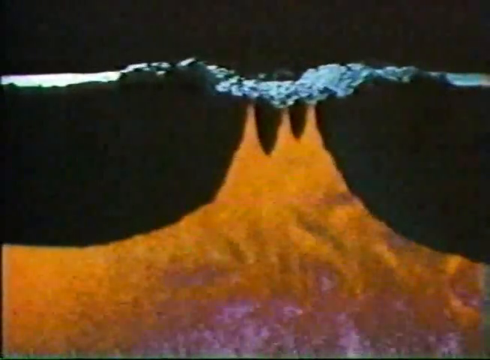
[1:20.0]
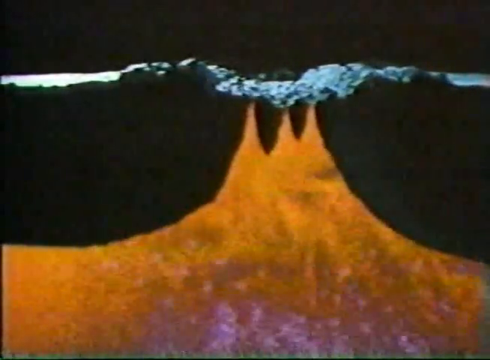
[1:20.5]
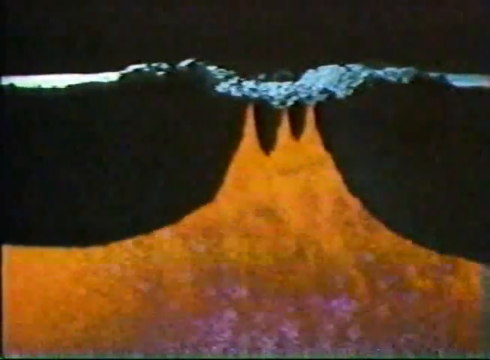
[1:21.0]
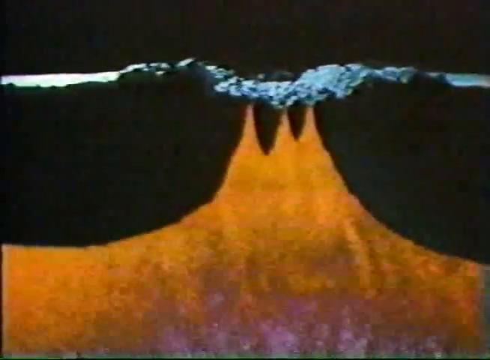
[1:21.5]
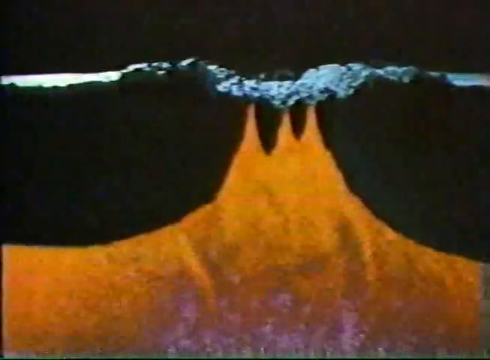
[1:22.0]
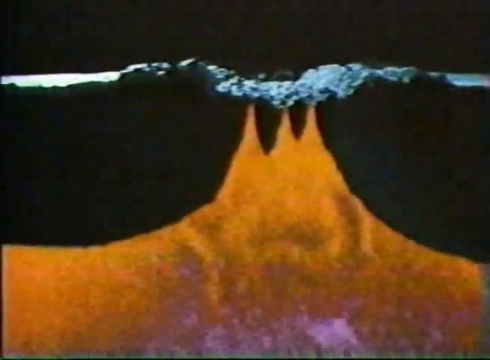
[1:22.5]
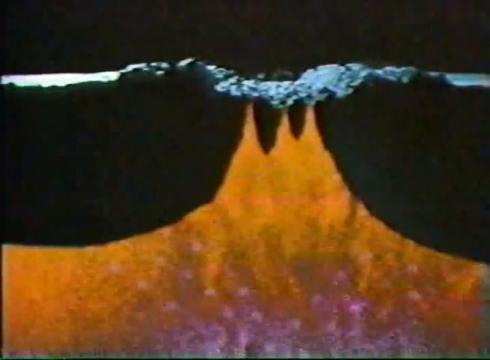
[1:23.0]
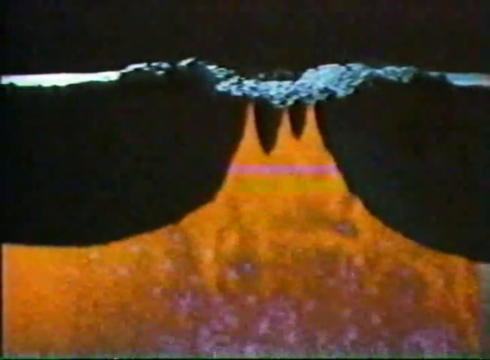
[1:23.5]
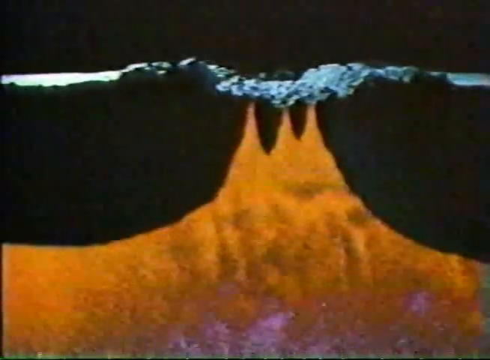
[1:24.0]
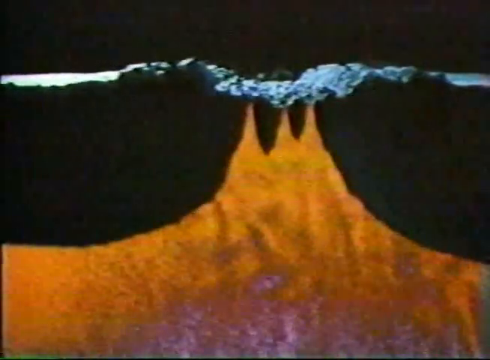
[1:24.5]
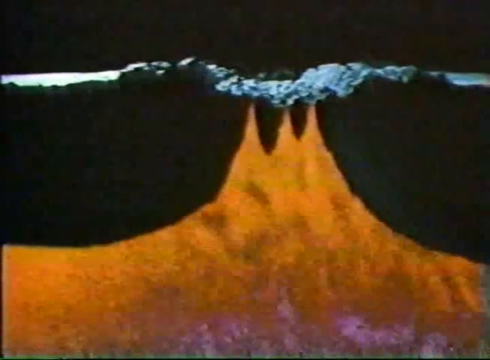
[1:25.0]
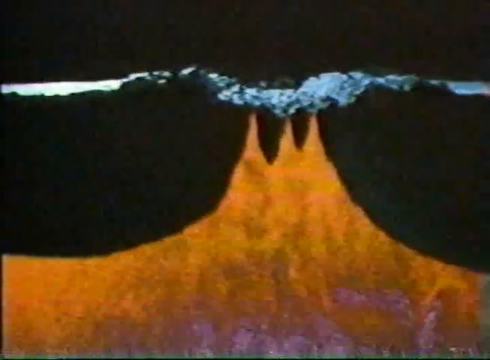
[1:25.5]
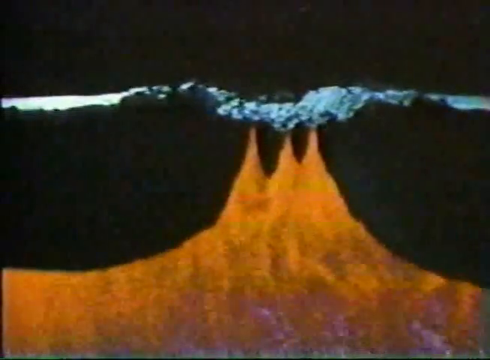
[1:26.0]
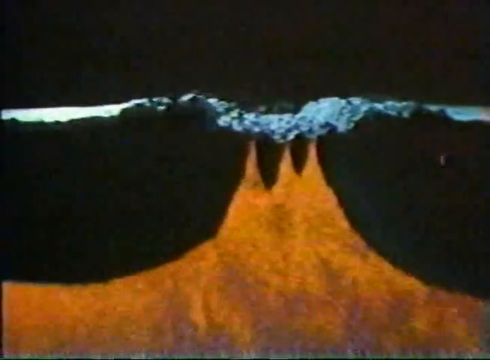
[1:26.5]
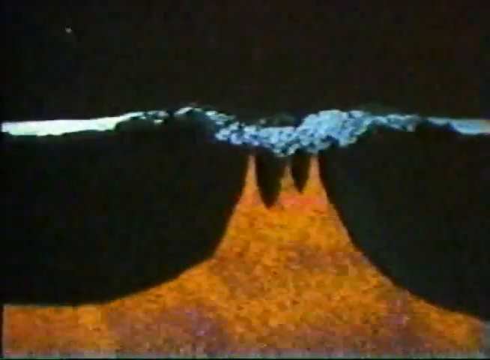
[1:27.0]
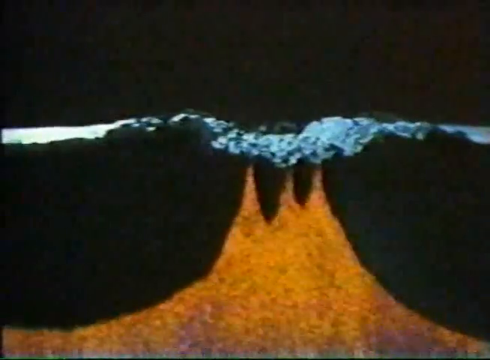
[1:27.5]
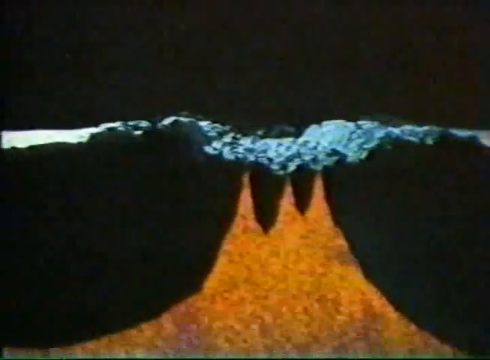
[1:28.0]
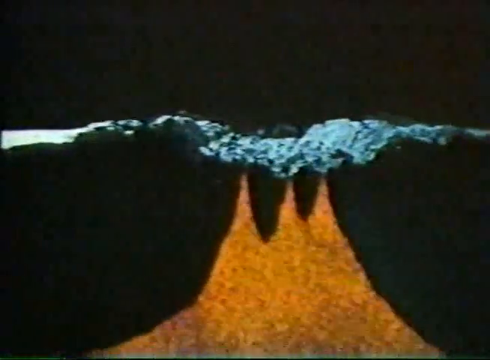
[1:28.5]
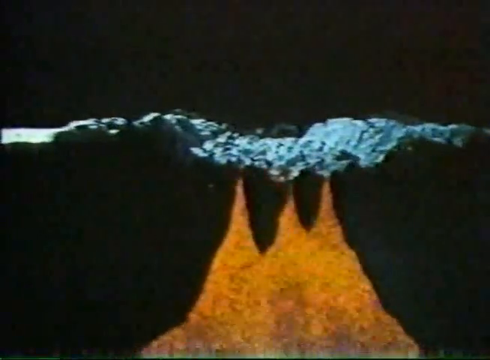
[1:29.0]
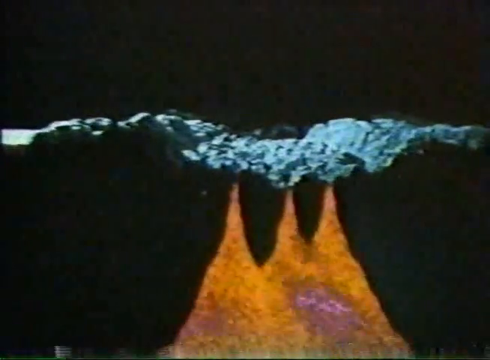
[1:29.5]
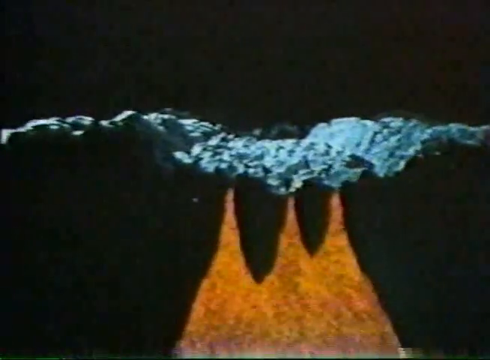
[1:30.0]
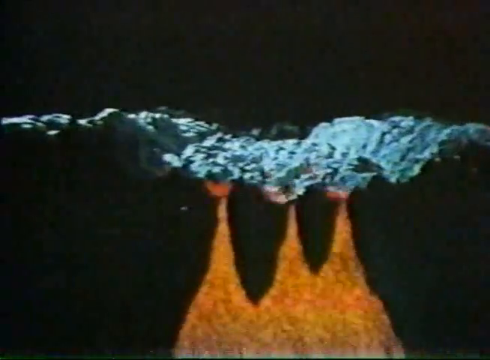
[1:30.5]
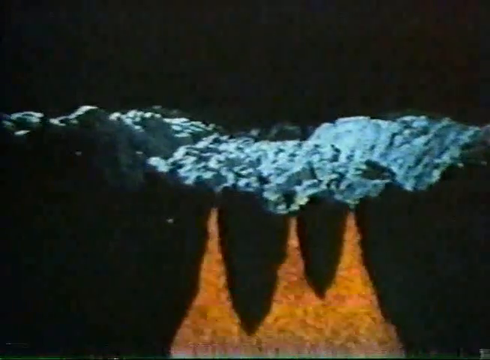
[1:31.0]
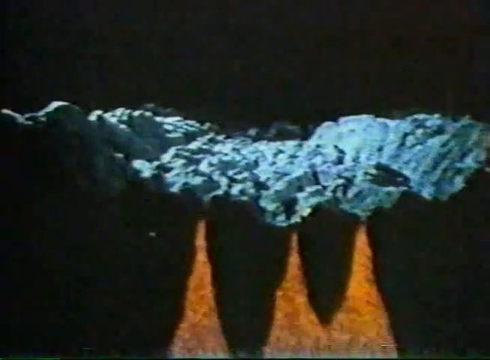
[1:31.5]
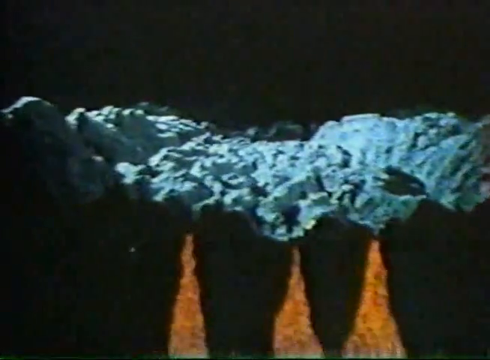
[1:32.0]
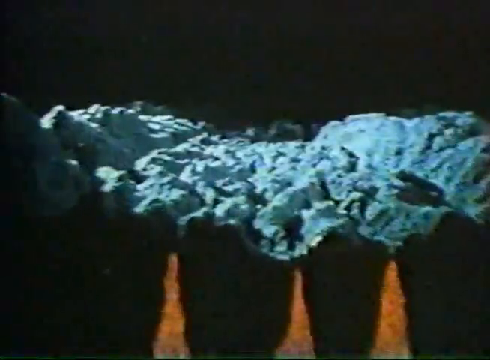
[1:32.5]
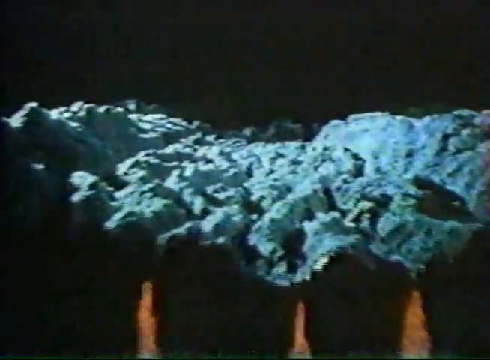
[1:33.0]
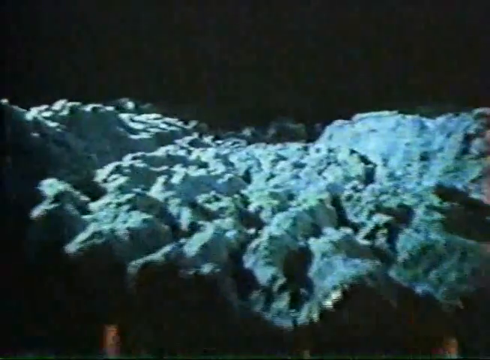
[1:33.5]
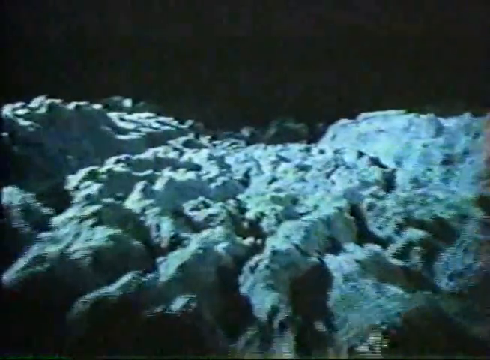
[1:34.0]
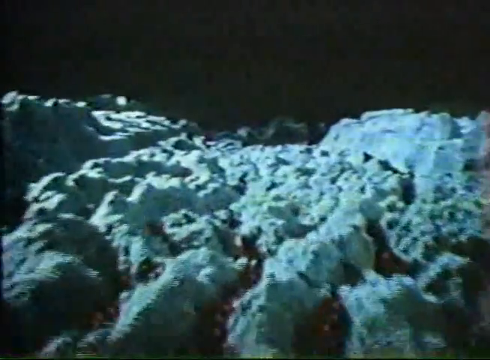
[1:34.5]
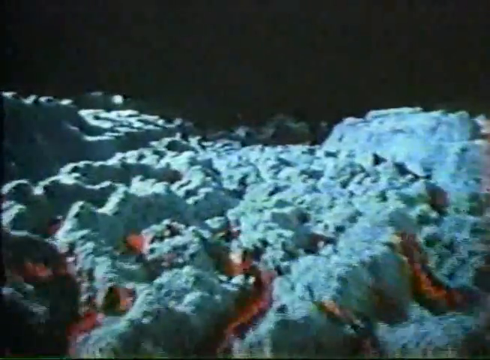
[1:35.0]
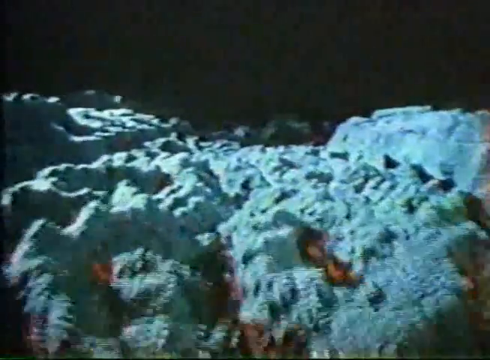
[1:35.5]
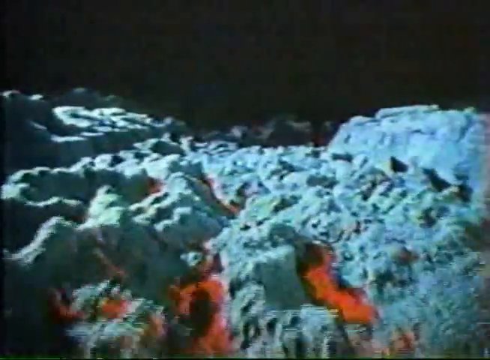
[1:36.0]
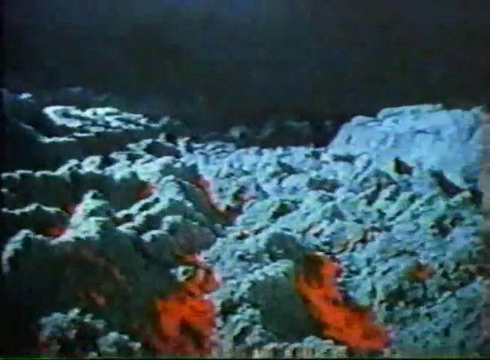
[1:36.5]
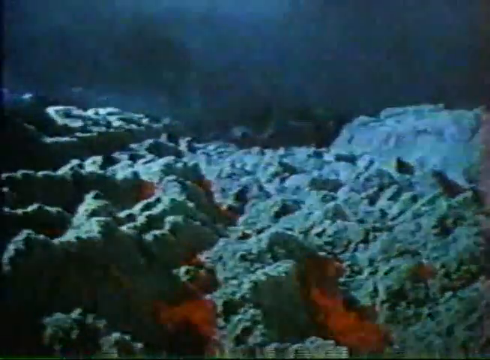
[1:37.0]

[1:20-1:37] The flames continue to burn, with a dark background on the sides, and the view is zoomed closer. The textured surface on top of the flame crashes and breaks into pieces, like broken stones. The orange flame is still underneath the broken surface. The flame is orange, and the burnt part is not turning black.